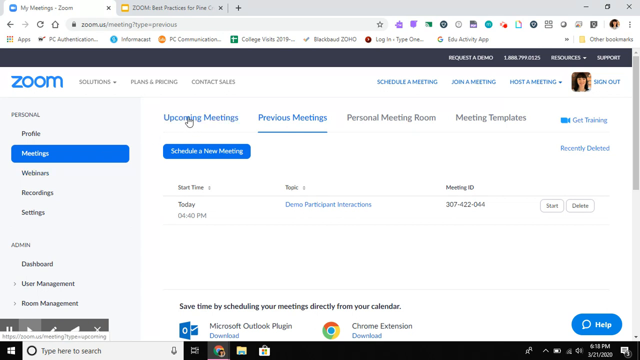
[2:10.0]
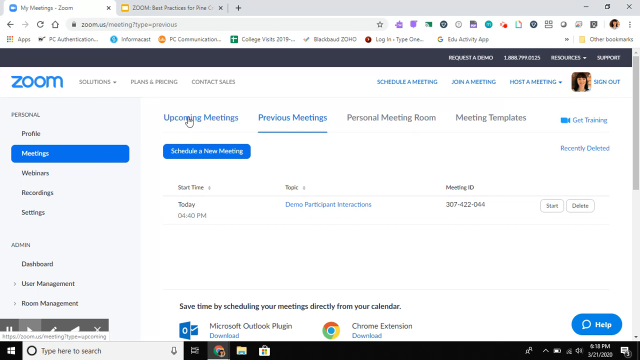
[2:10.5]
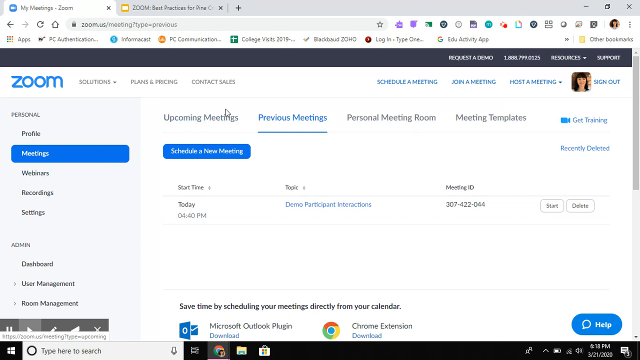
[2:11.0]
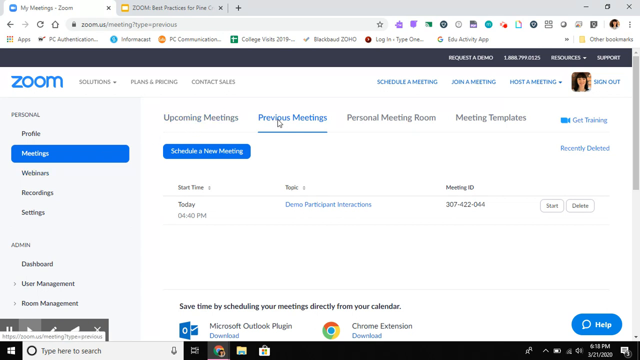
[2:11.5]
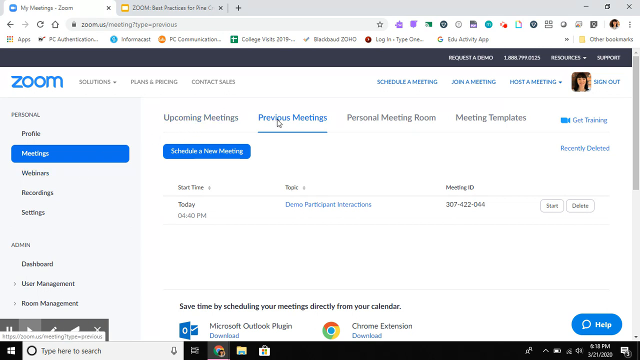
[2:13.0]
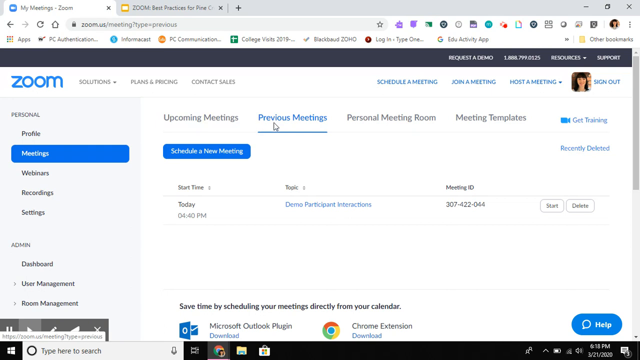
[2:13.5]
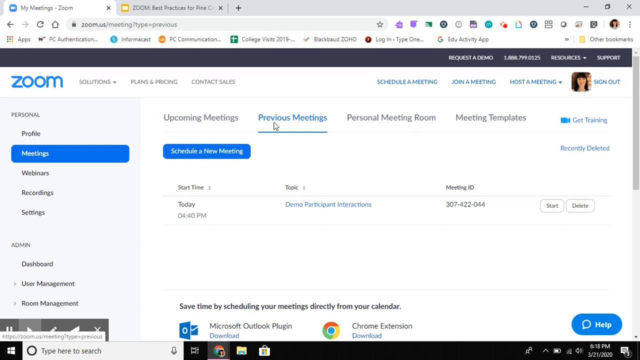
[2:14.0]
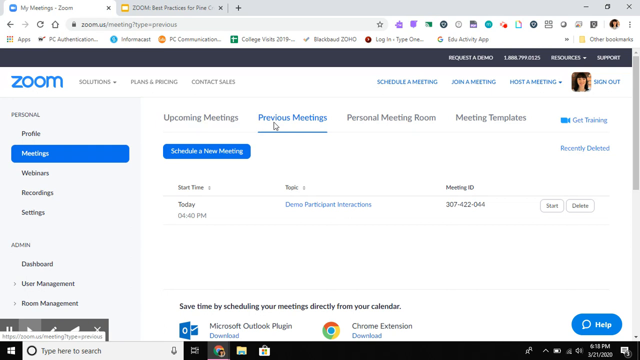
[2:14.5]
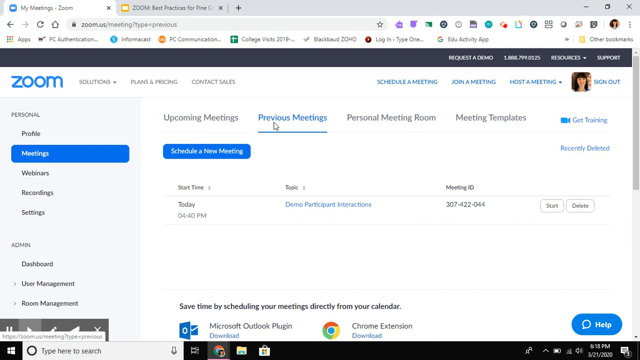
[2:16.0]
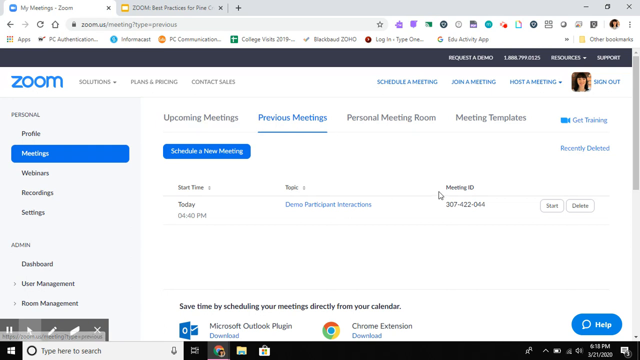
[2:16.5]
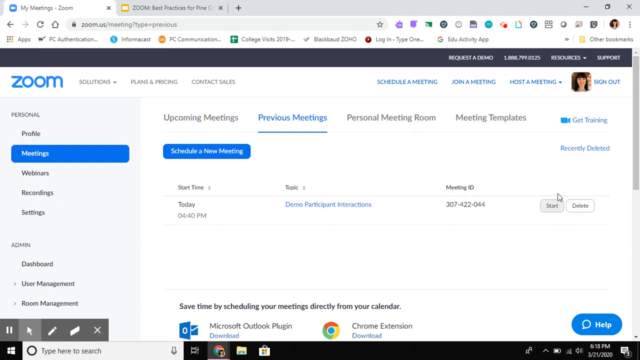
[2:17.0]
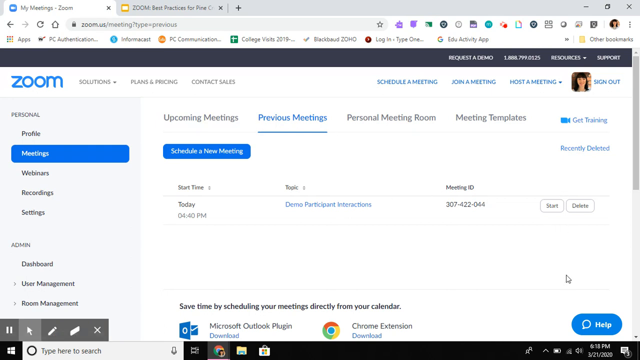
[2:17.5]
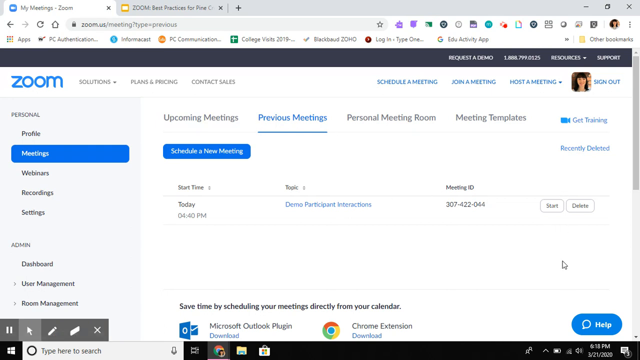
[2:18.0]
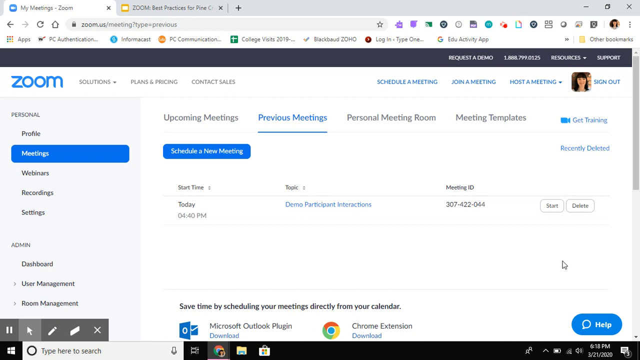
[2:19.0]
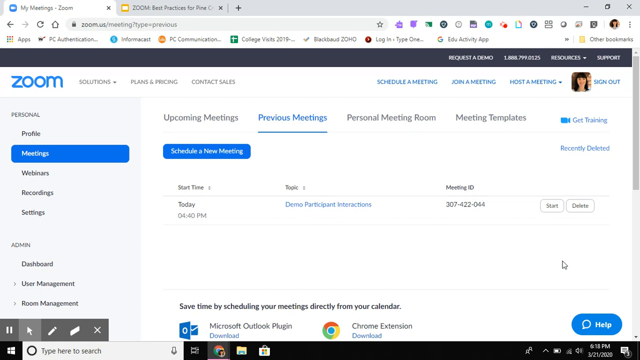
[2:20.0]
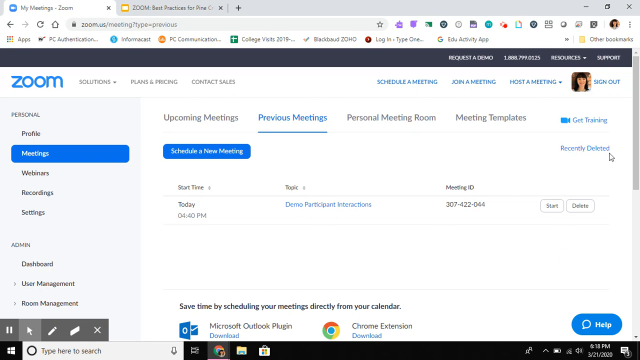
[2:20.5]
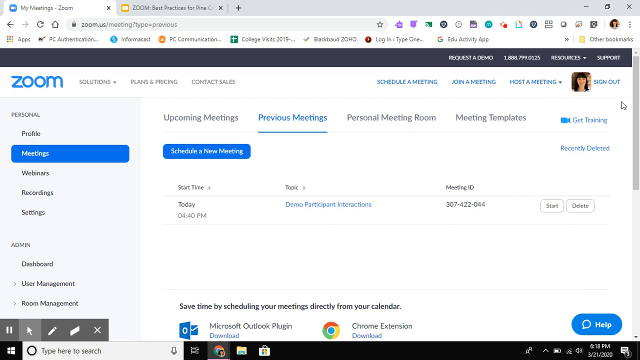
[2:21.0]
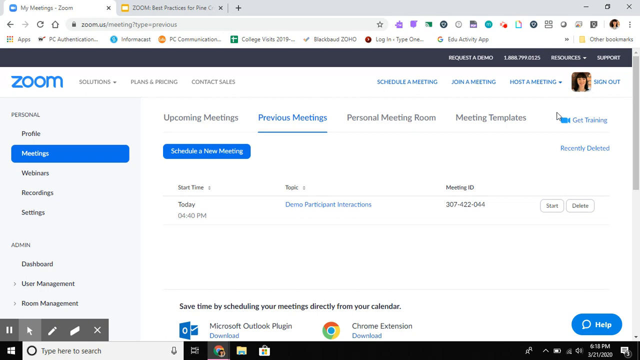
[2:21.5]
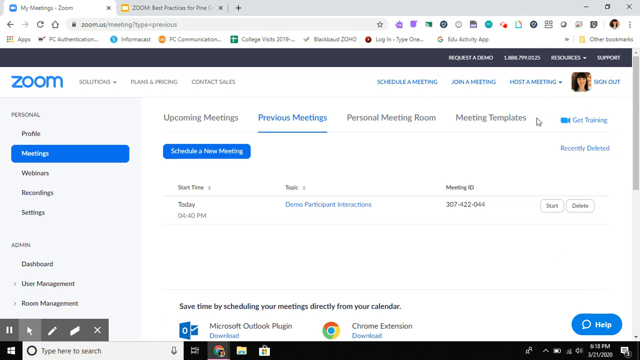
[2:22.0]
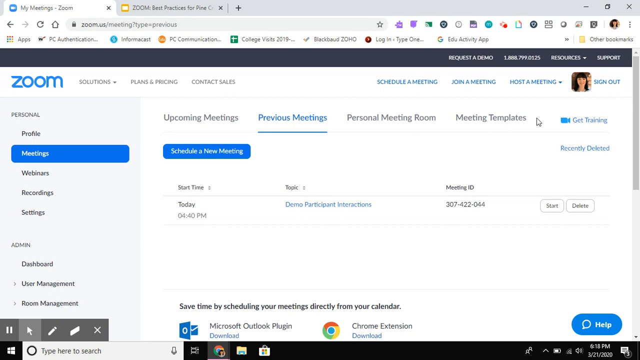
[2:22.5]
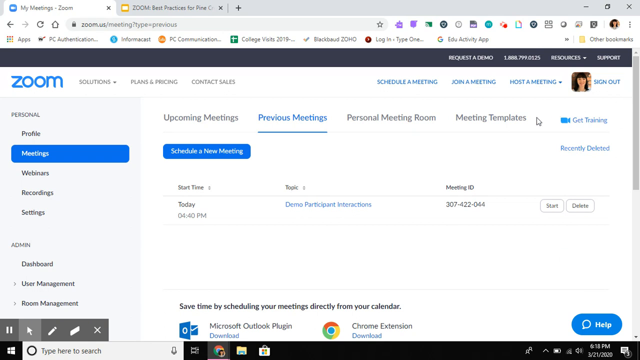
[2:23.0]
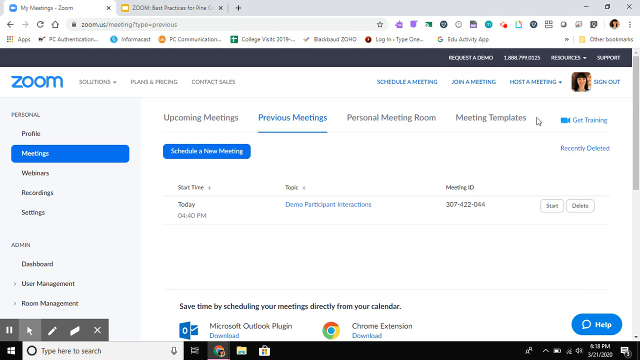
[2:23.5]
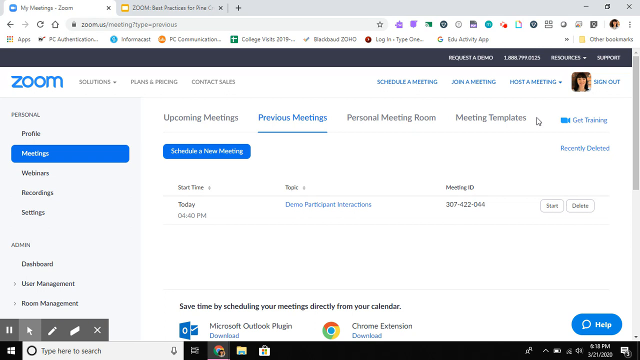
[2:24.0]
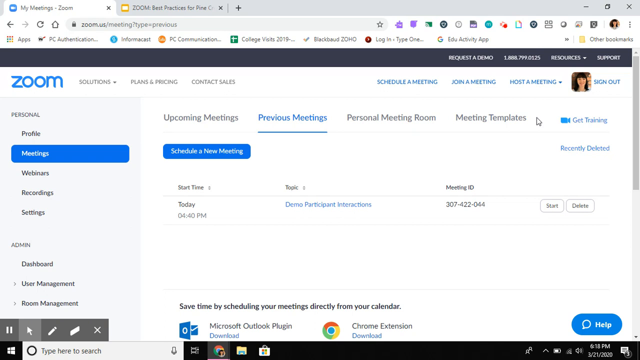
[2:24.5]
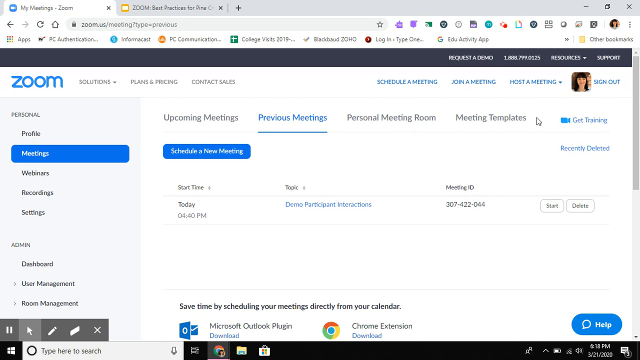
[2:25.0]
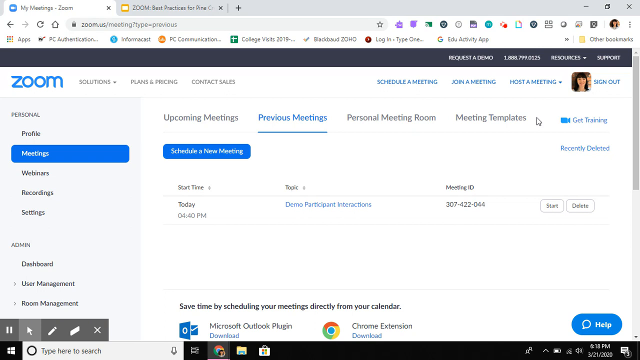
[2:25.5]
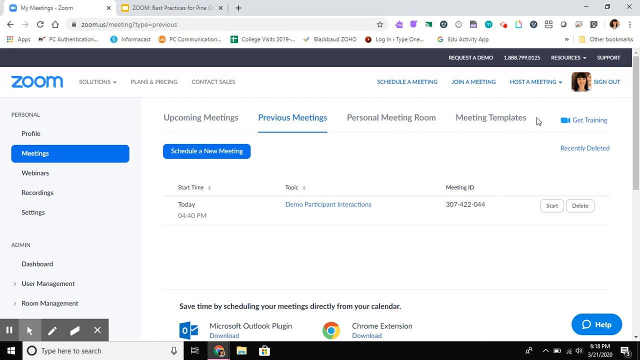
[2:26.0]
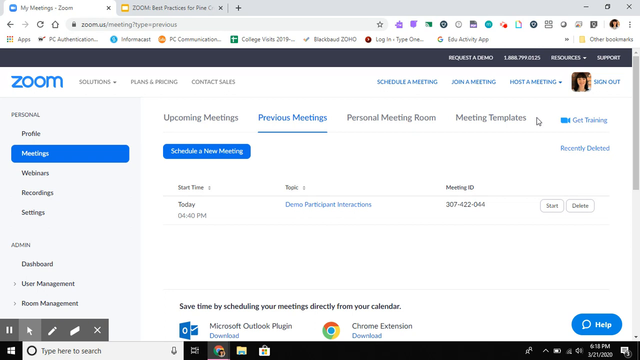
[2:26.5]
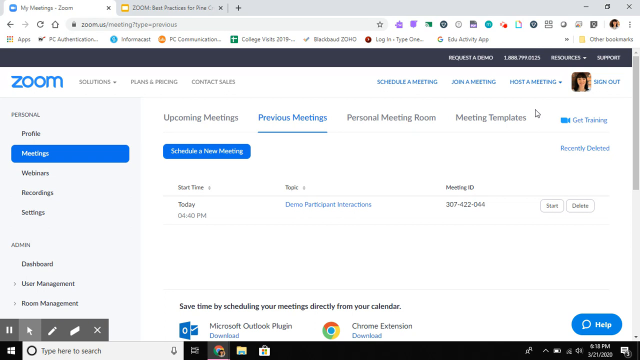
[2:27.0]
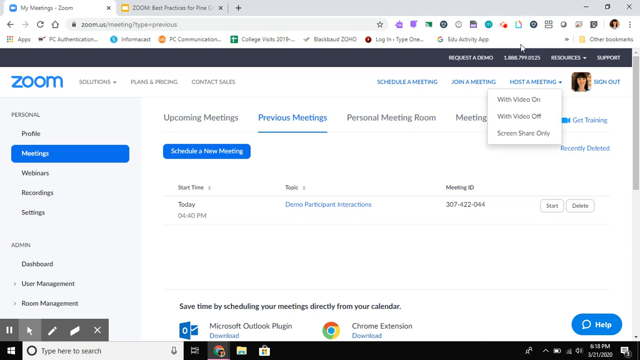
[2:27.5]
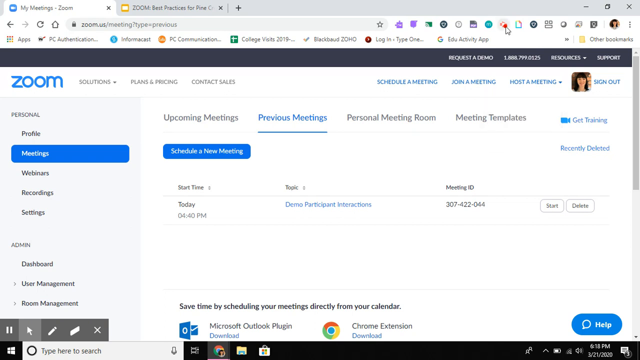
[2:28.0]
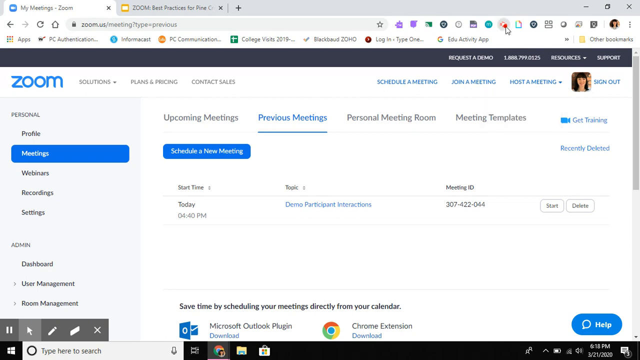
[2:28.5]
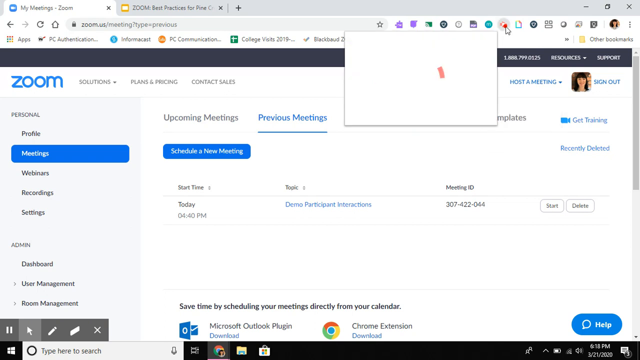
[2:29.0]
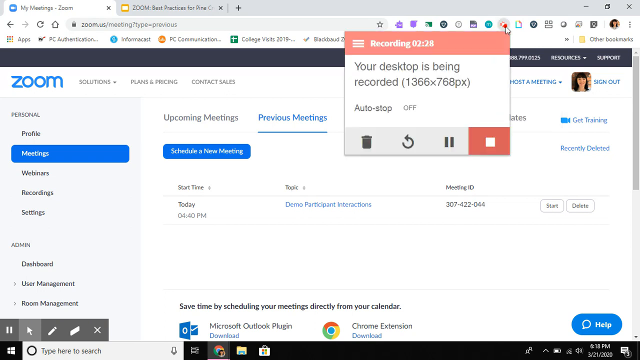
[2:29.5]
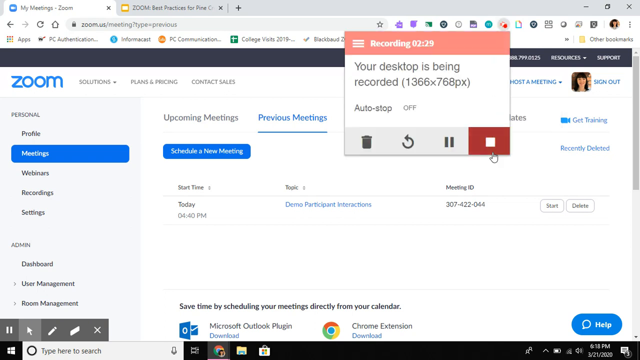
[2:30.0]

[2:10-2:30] The user hovers over the menus at the top: "Upcoming Meeting", "Previous Meetings", "Personal Meeting Room" and "Meeting Template". Text at the bottom says "save time by scheduling meetings directly from your". Below are two options. The first shows the Microsoft Outlook icon and says "Microsoft Outlook Plugin", with a download button. The second shows the Chrome icon, a blue, red, green and yellow circle, and says "Chrome extension", with a download option. On the bottom right is a blue button that says "Help". On the top right is the header, which is black, red and white, with "request a demo", the username, "resources" and "support".